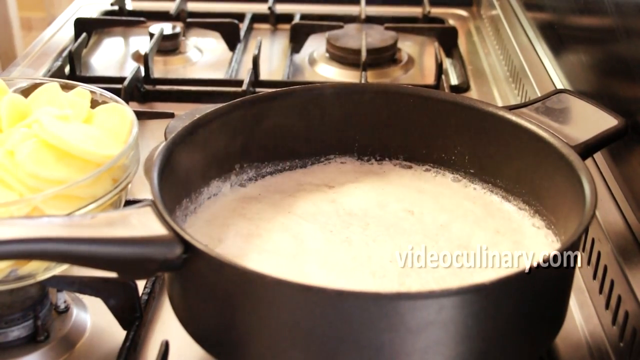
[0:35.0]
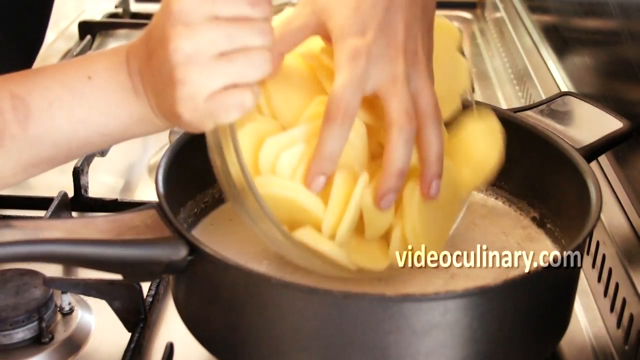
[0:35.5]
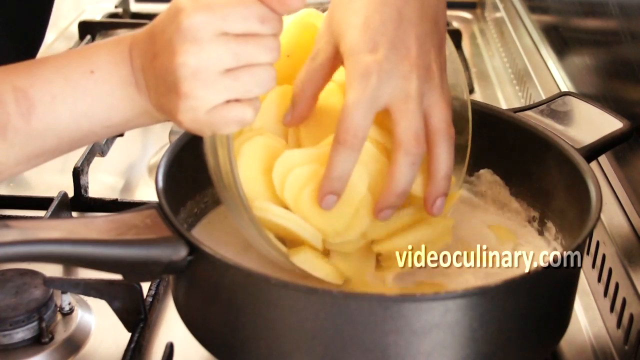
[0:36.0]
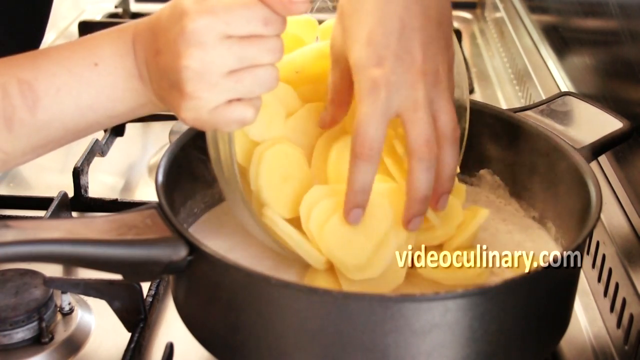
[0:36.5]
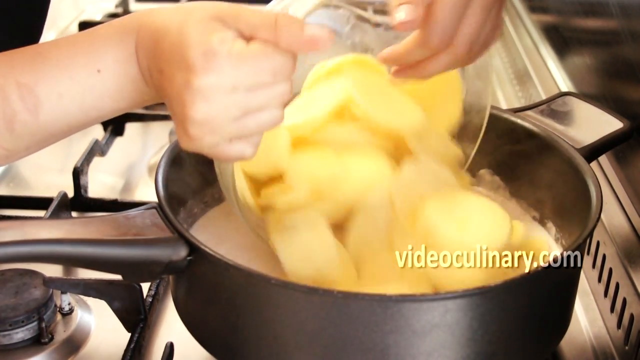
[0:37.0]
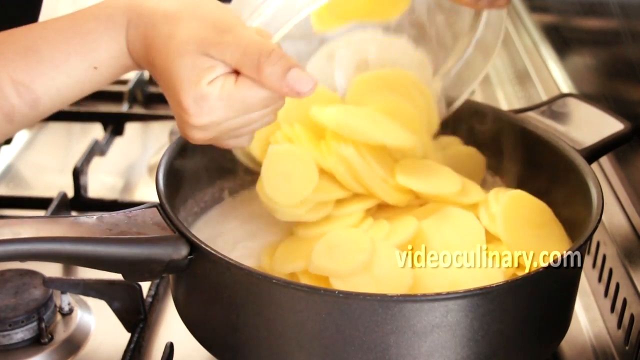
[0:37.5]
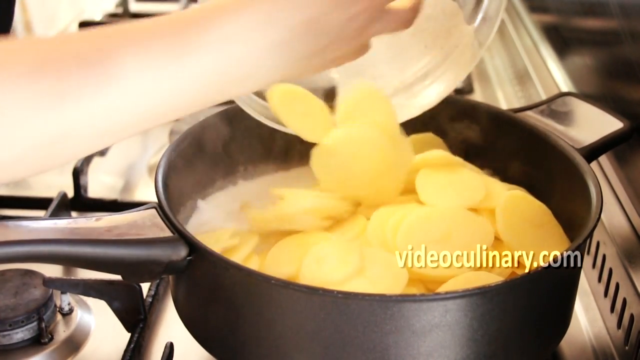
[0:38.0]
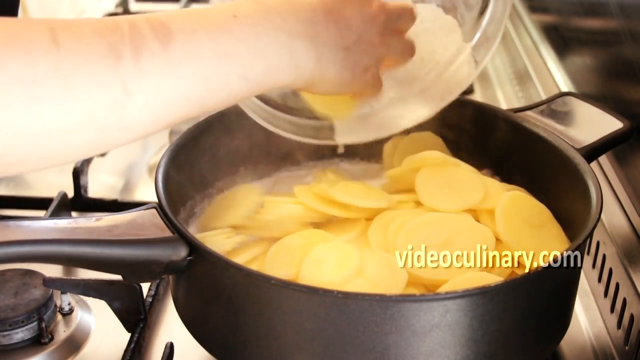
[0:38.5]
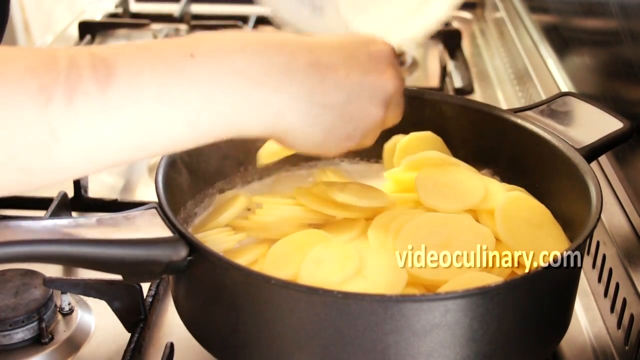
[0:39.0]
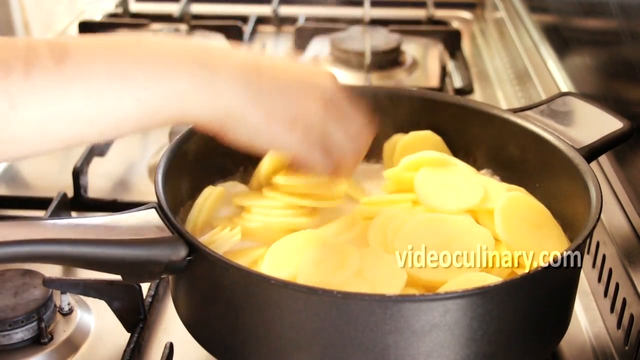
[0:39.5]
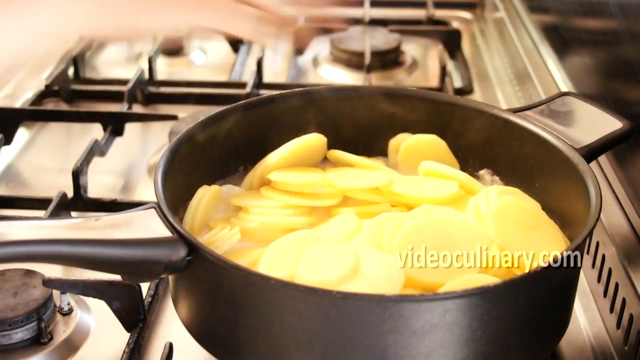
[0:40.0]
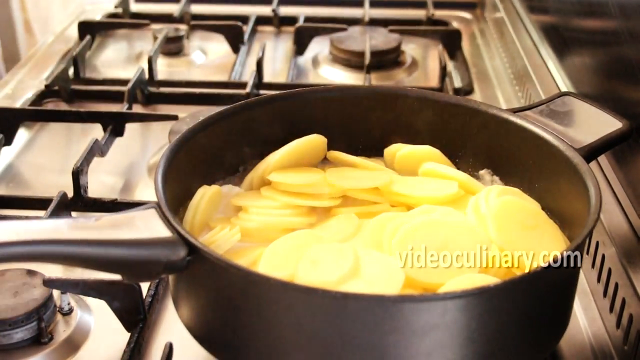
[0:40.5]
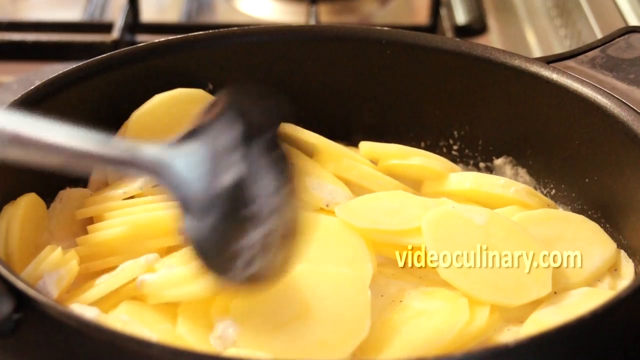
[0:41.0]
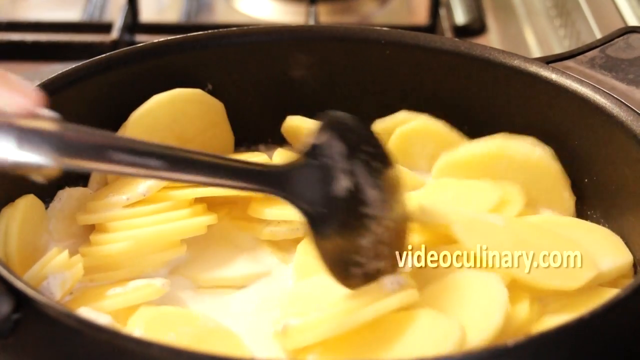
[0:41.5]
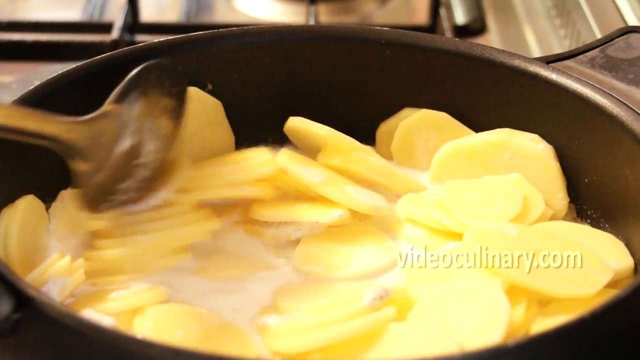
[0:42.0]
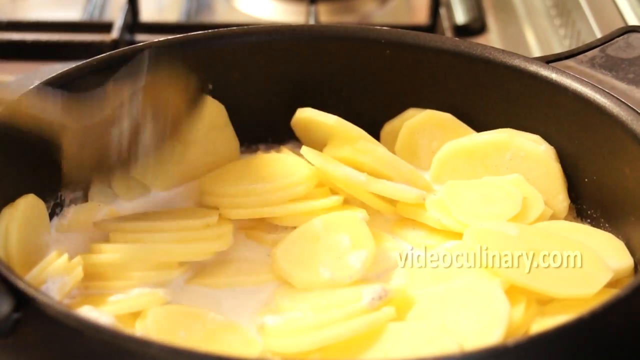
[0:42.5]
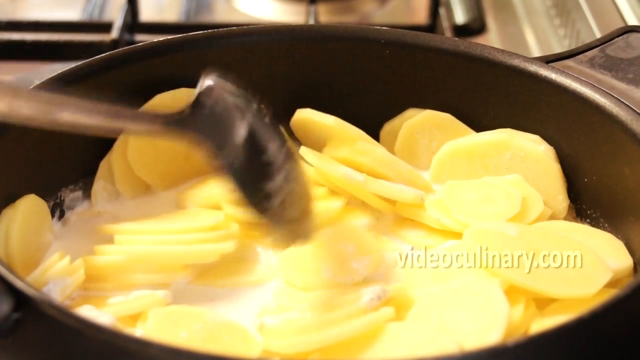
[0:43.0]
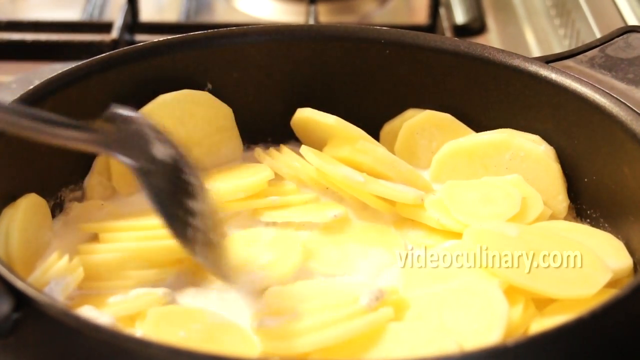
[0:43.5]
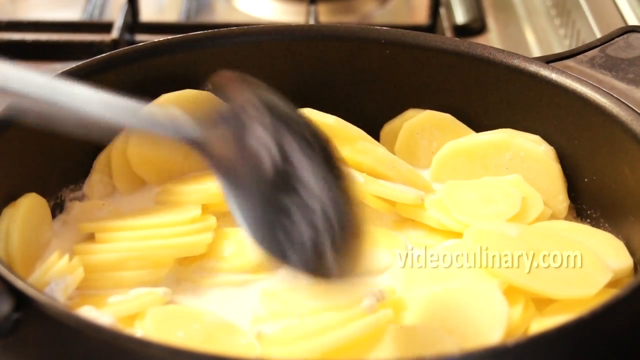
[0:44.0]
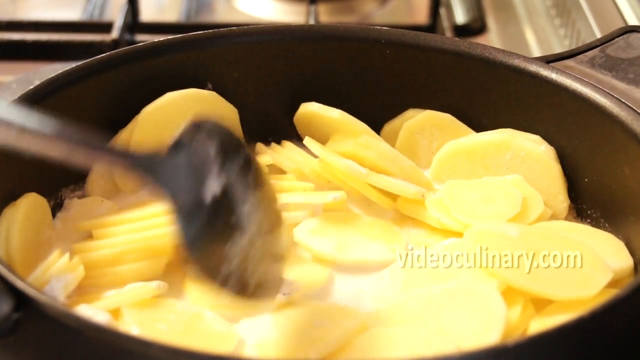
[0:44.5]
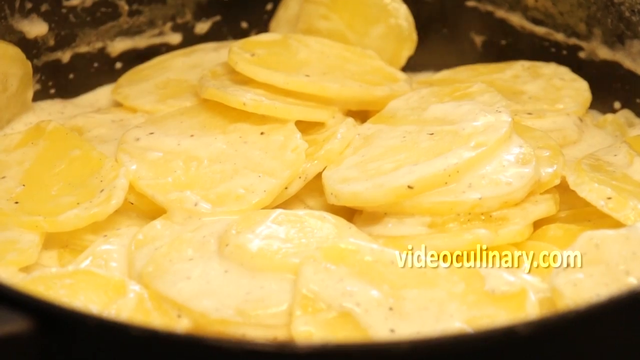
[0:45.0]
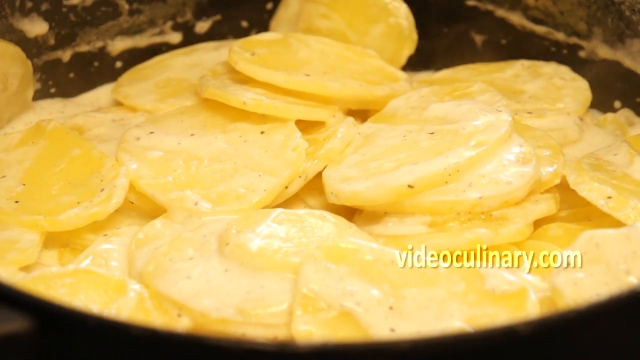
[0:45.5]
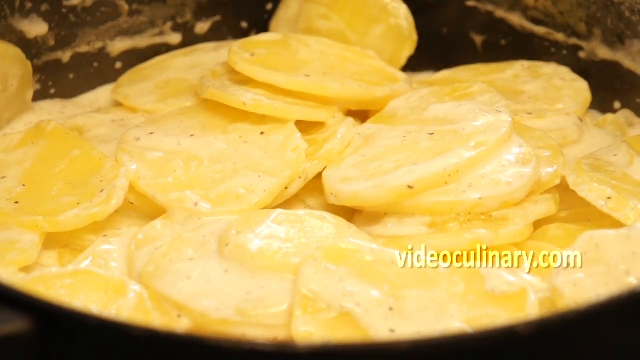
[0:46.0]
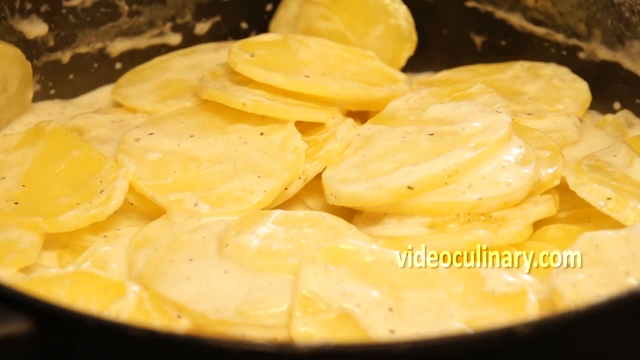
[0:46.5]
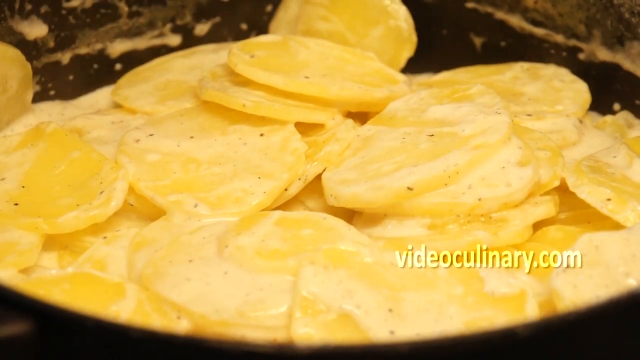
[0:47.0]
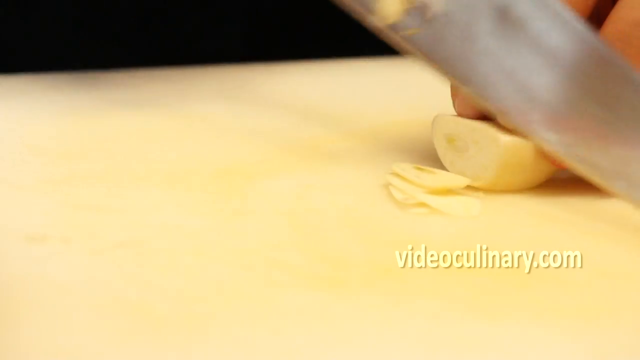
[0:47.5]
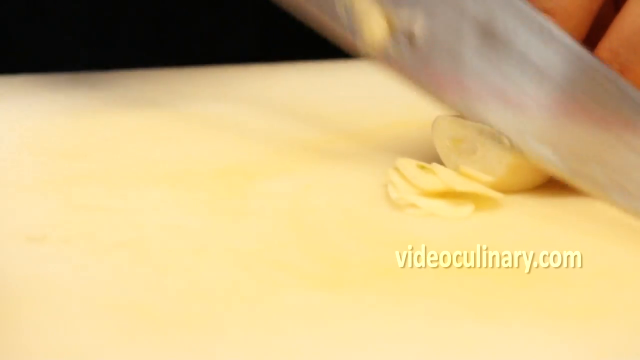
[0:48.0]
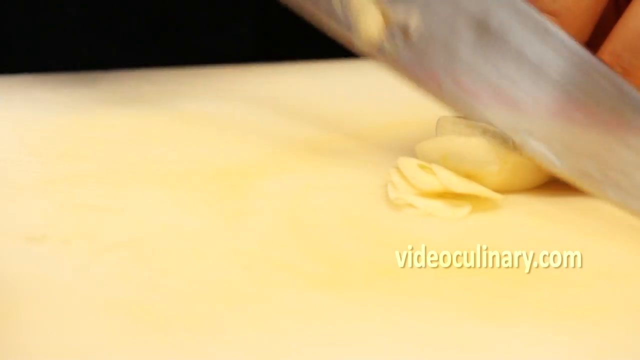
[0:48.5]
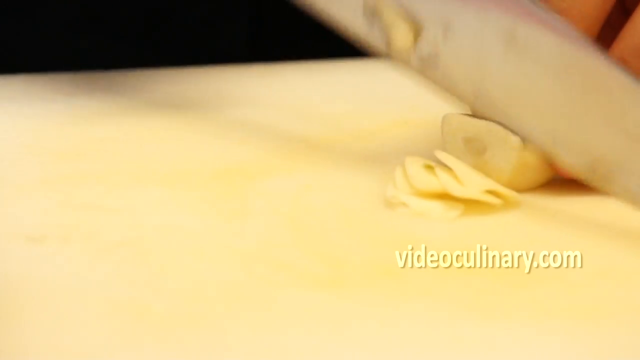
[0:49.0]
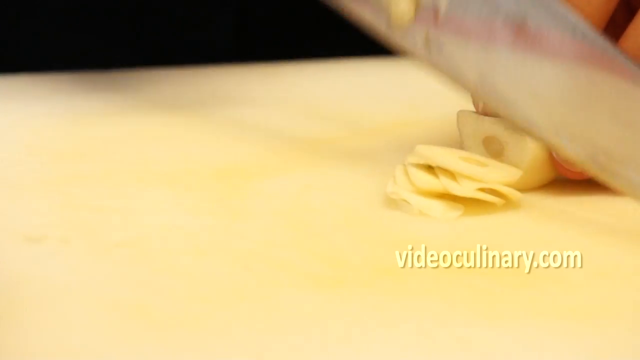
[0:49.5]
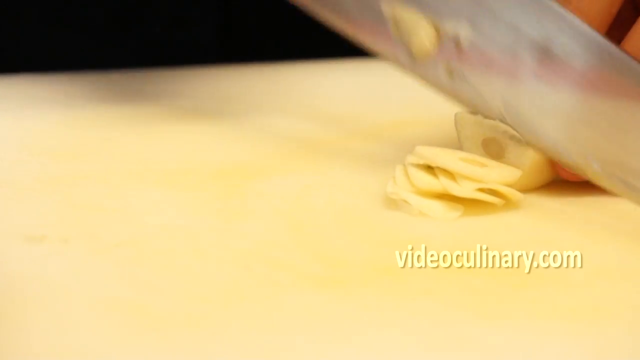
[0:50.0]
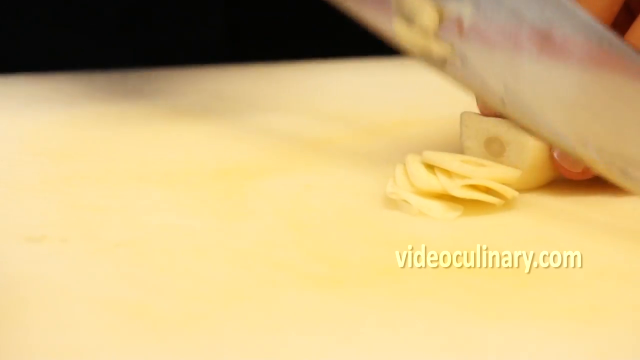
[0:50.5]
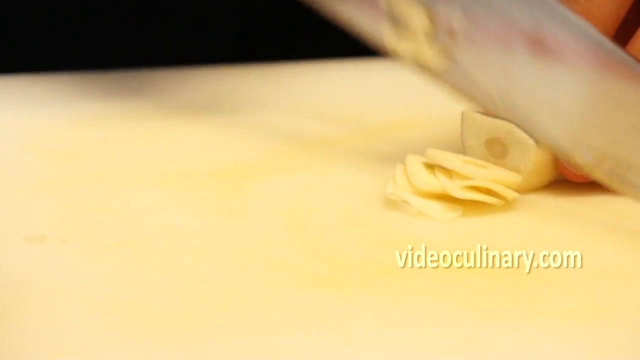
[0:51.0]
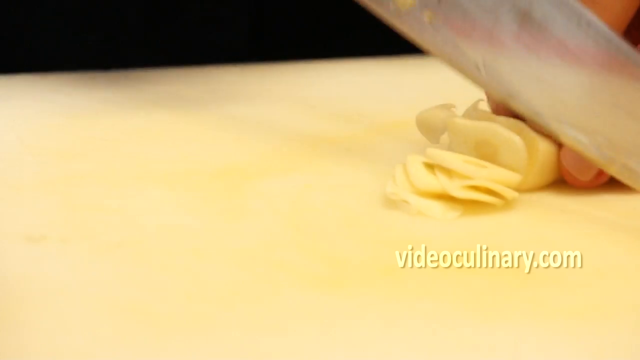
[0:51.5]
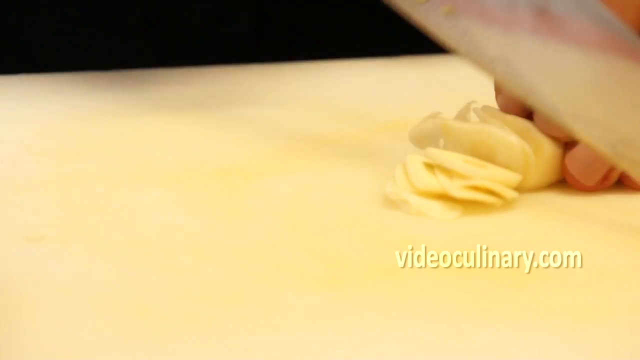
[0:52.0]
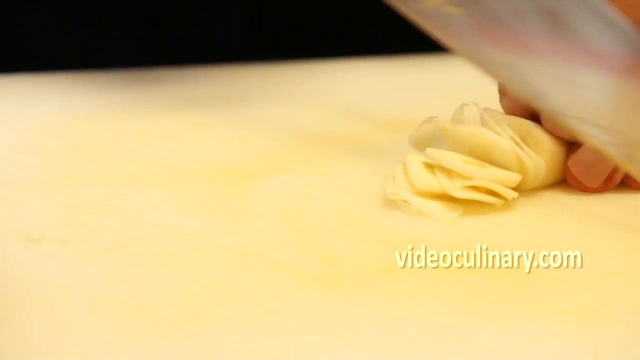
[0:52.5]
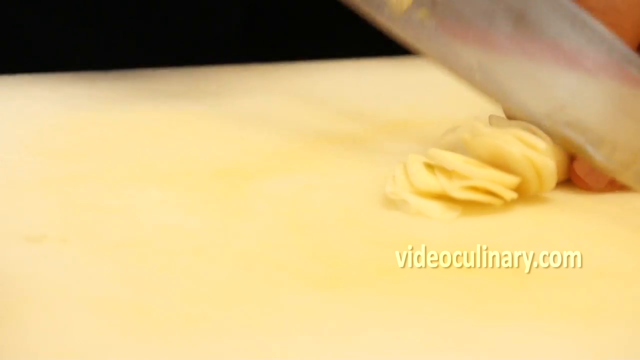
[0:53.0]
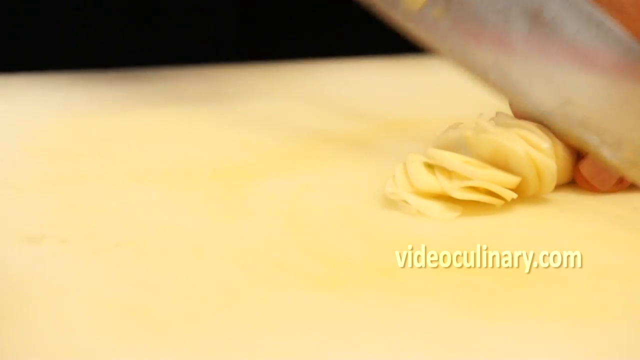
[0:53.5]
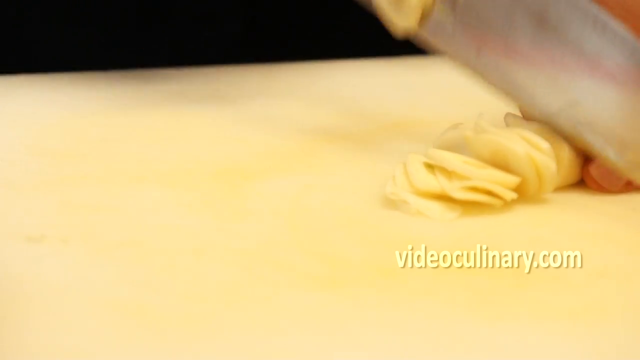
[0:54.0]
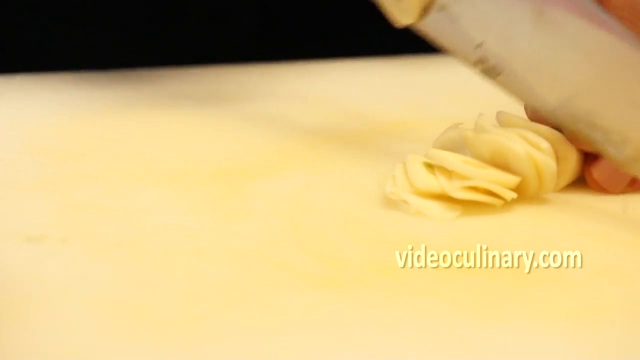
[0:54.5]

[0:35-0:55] The black pot is on a stove burner. Two hands grip a glass bowl full of potato pieces; one hand holds the bowl while the other pushes the potato pieces into the pot, where everything is cooking. A spoon moves through the potato pieces, mixing and moving things around as everything cooks, and a shot shows the potatoes and the white sauce mixing together. Then, on a cutting board, a hand holds a potato while a knife cuts it into very thin slices until the entire potato is in tiny slices.